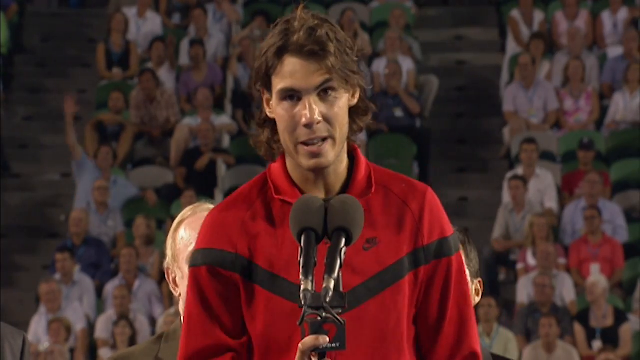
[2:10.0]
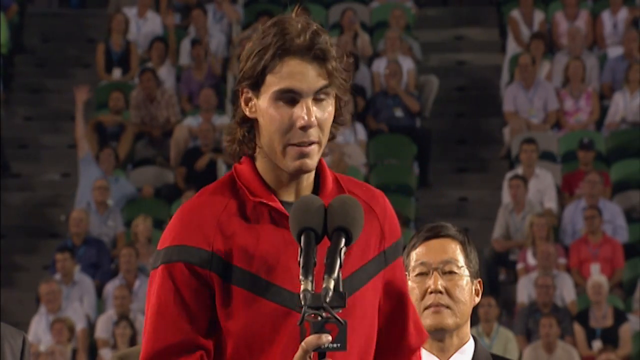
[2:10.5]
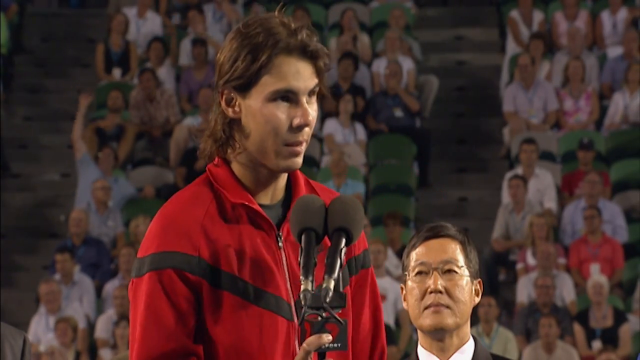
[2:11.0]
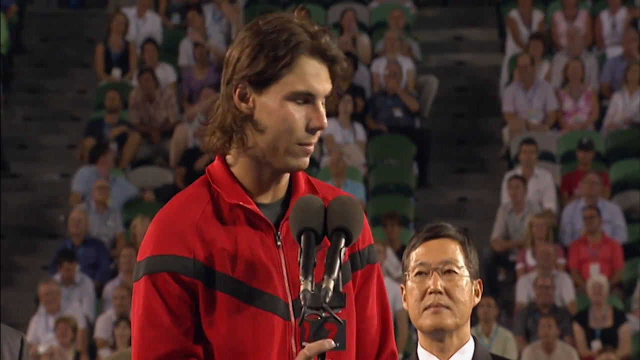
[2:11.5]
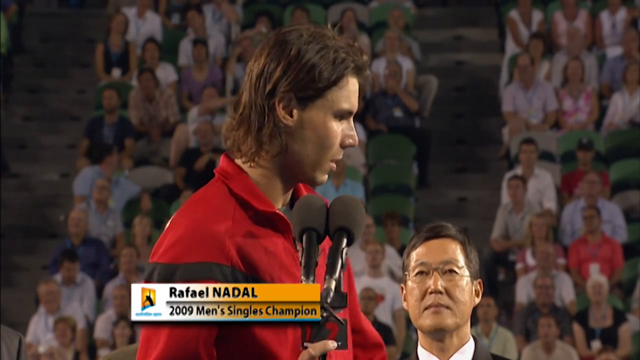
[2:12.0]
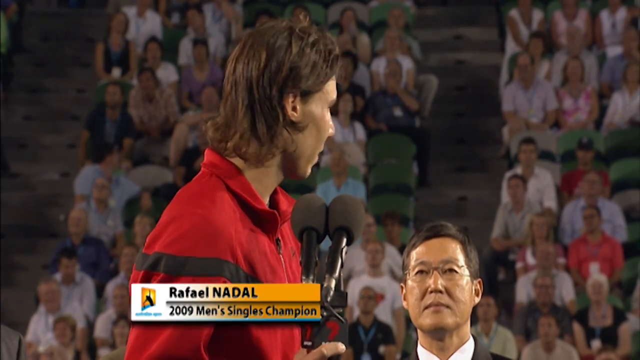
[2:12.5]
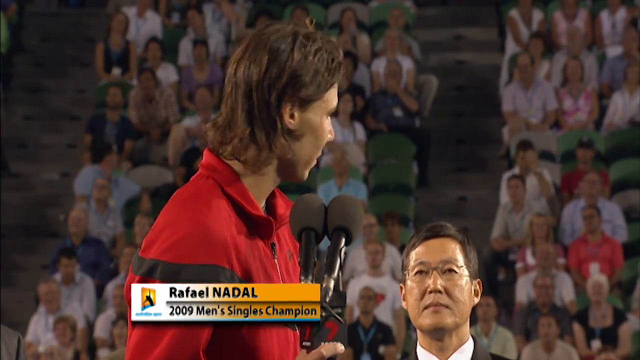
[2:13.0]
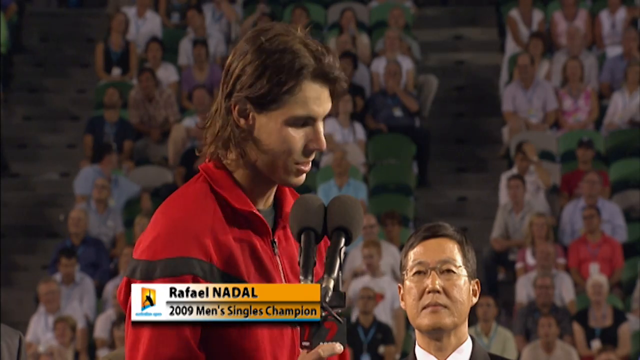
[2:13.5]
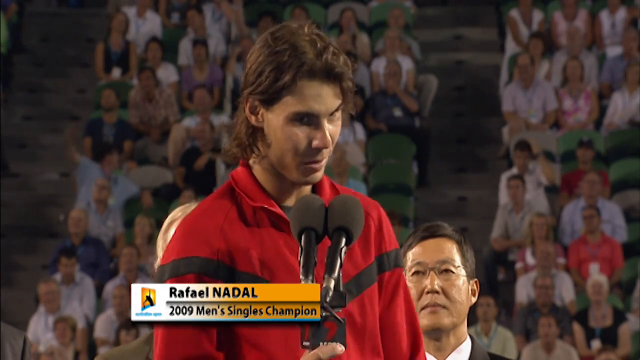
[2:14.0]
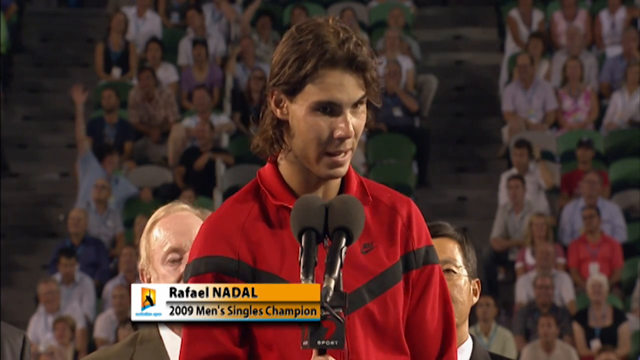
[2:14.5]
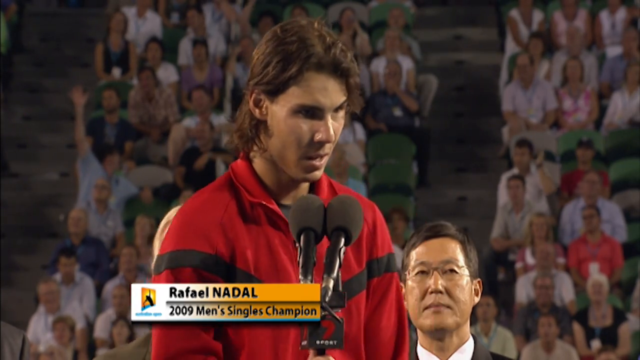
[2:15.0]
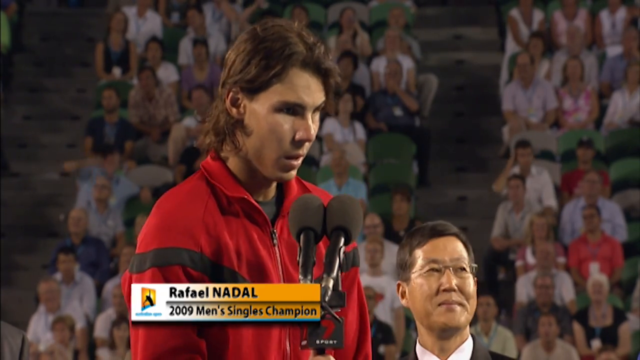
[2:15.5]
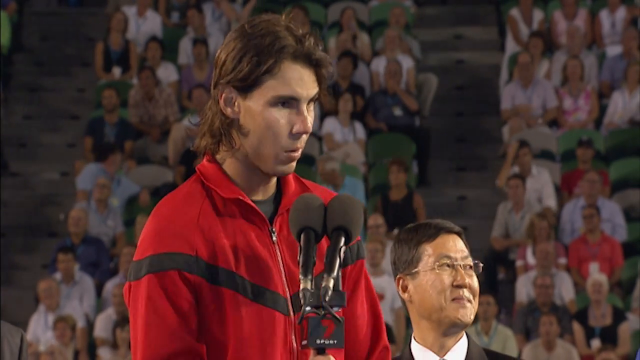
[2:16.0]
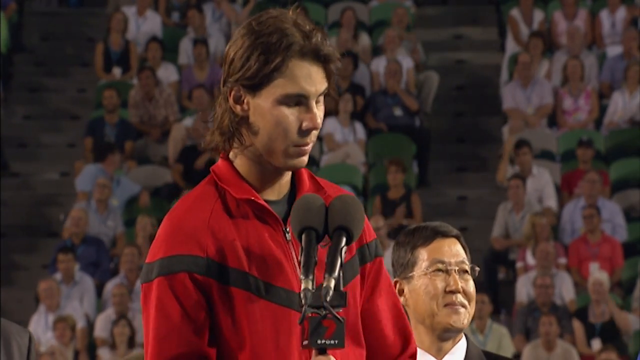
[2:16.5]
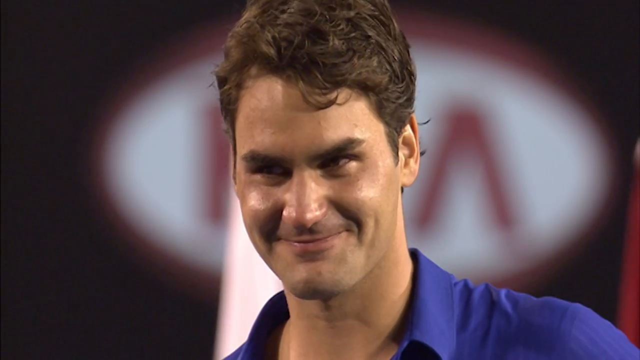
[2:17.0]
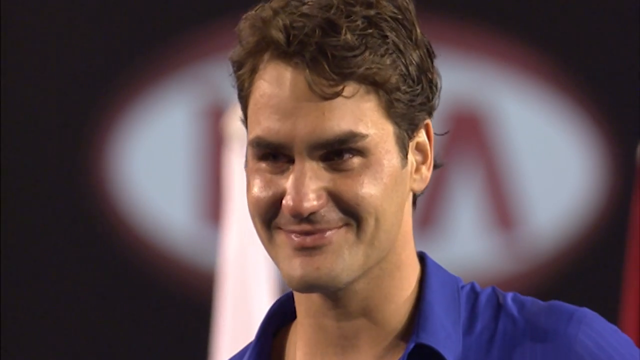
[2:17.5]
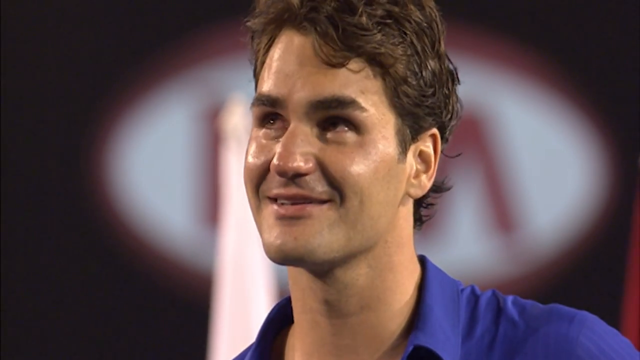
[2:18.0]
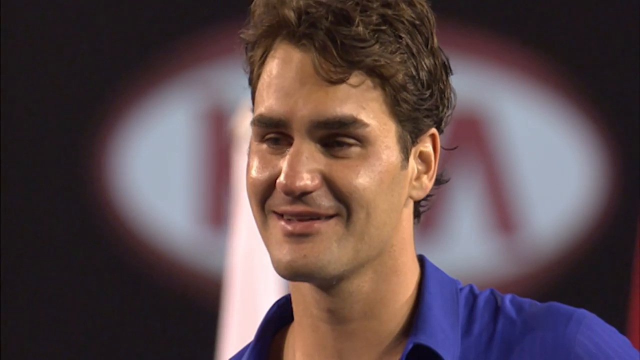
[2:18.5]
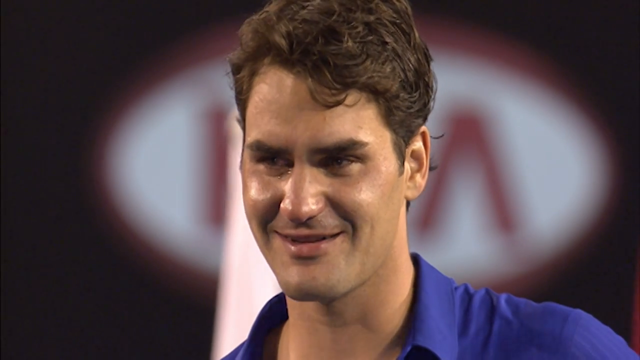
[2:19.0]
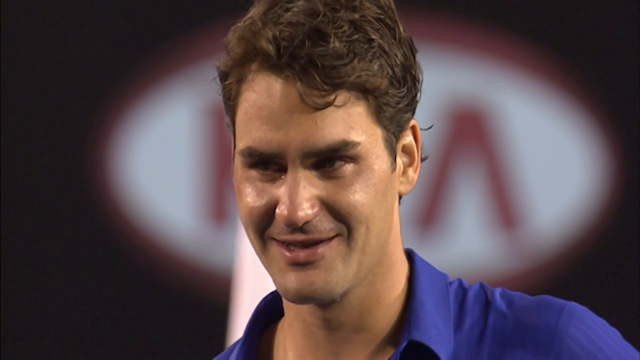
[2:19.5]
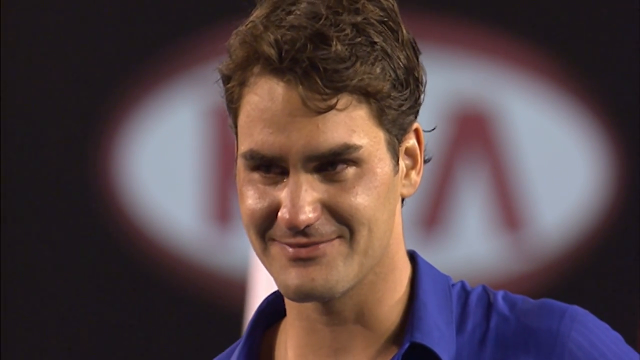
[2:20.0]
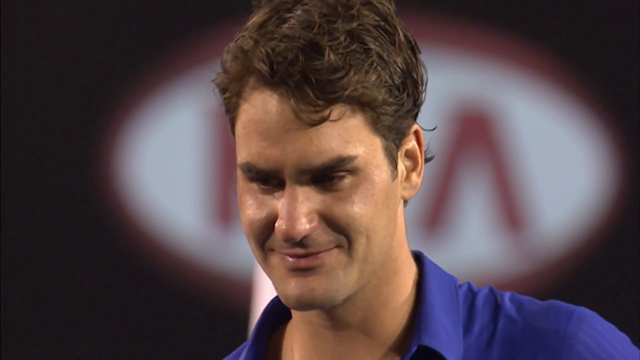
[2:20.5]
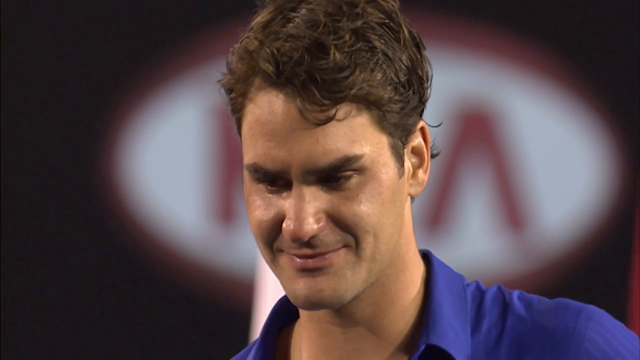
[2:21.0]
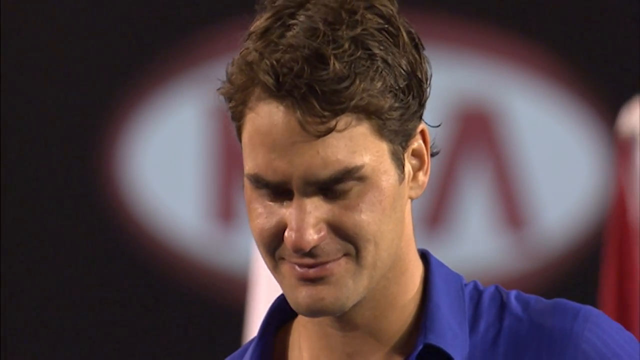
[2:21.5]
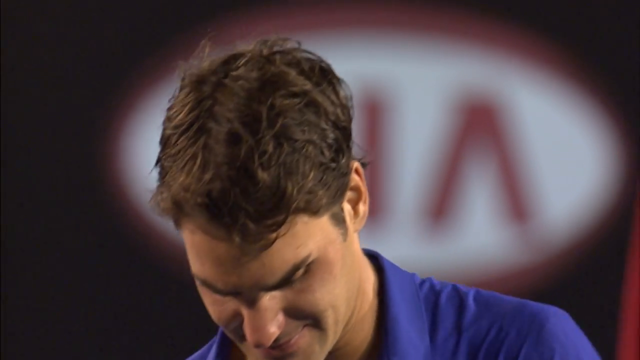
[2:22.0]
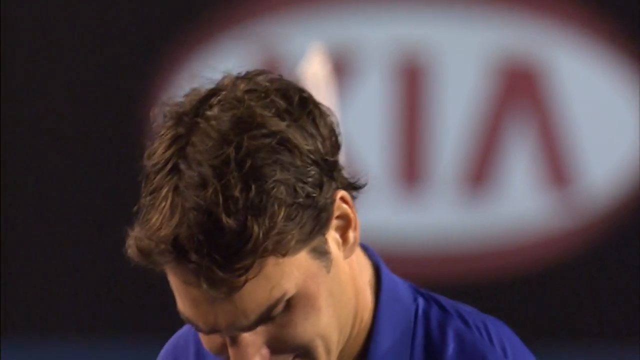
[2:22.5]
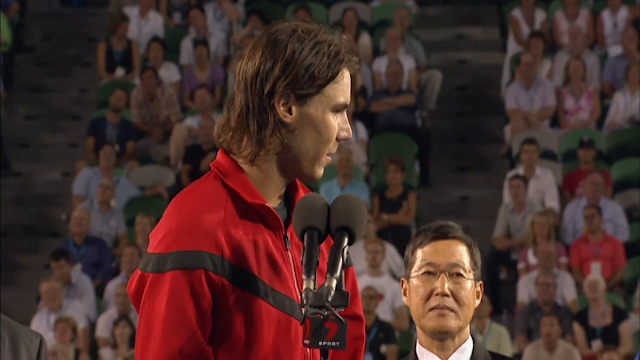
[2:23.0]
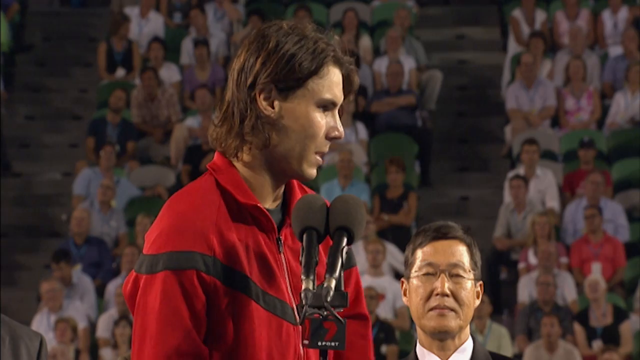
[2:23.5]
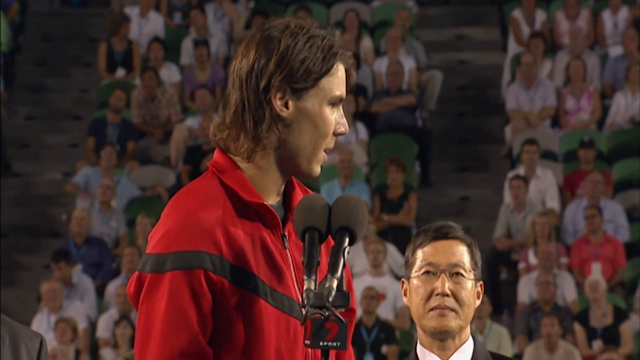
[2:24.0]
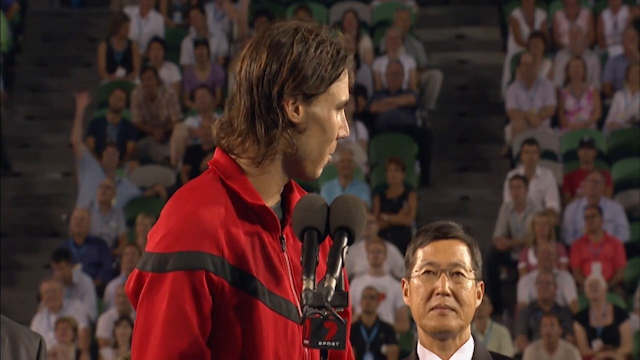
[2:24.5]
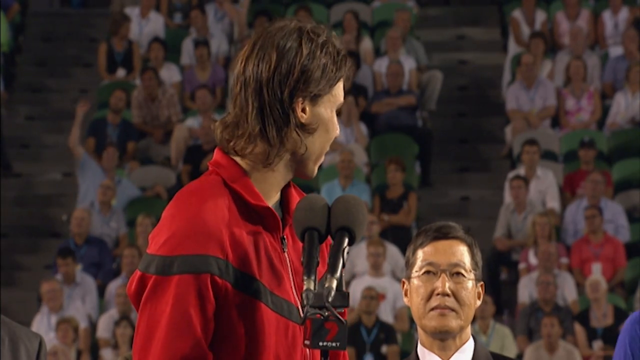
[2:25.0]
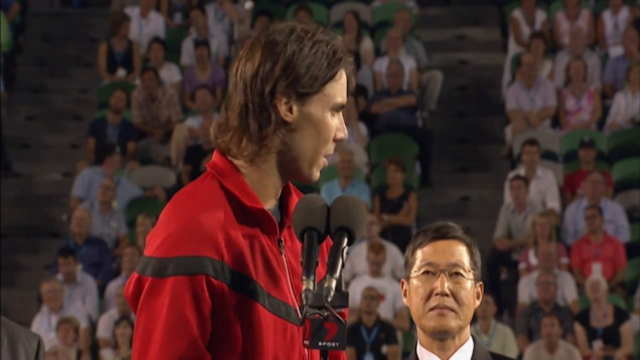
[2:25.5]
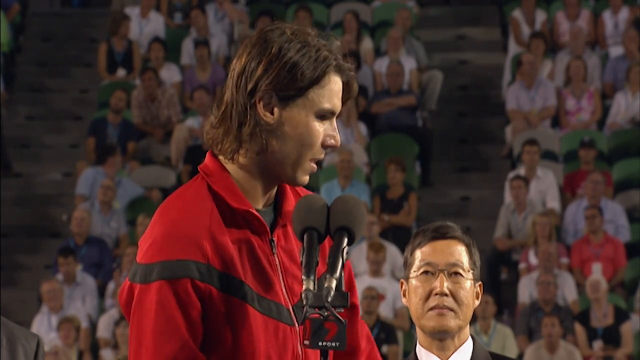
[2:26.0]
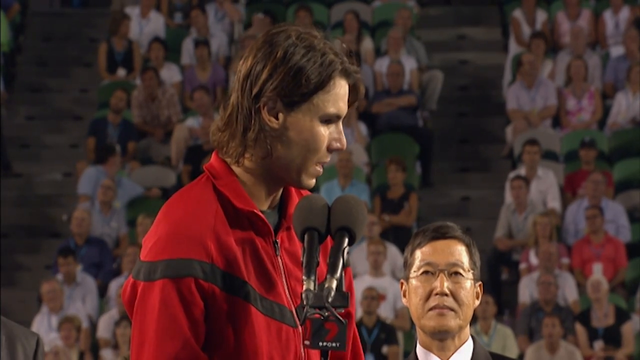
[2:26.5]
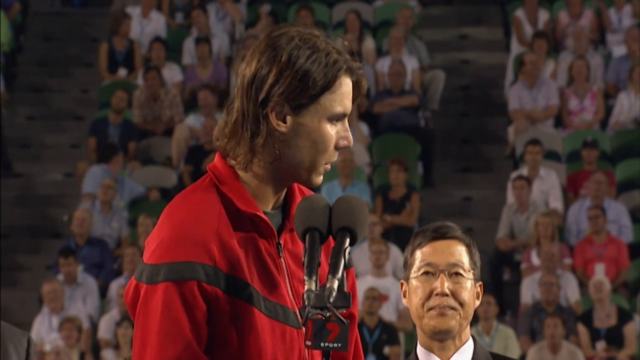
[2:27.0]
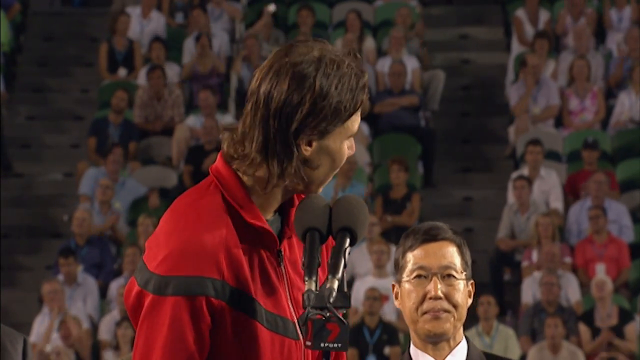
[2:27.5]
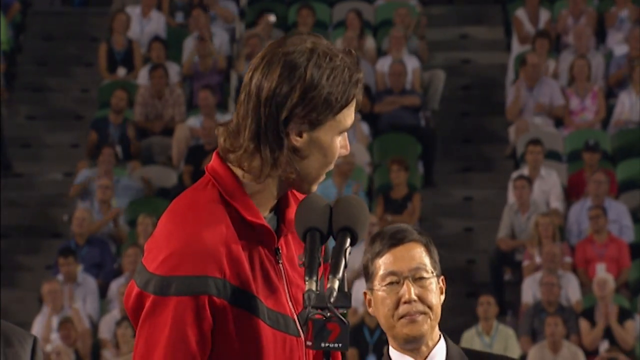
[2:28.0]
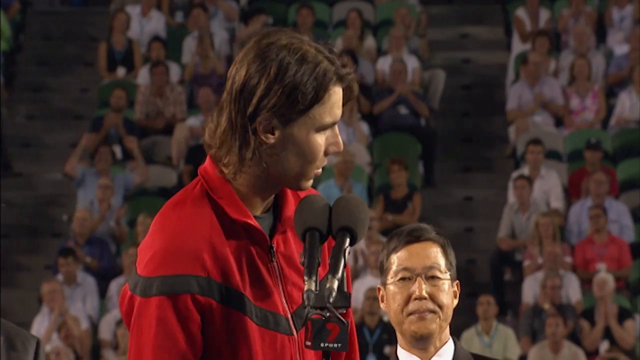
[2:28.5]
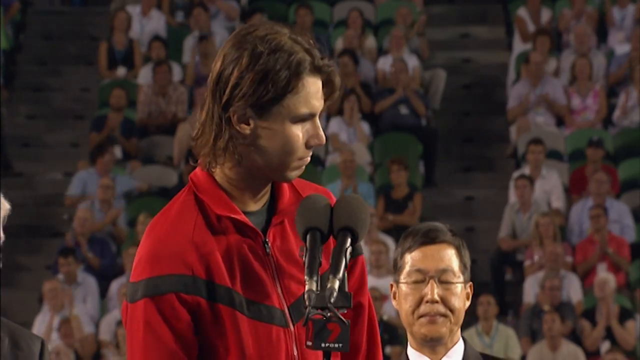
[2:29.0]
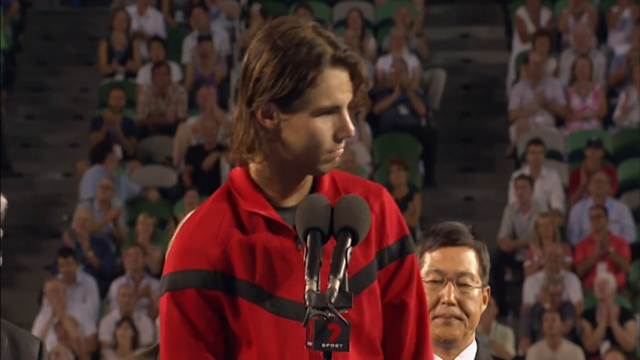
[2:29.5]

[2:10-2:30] The winner, named Raphael Madan, talks while holding the mic with his right hand and wipes his nose. Behind him the fans raise their hands, most of them clapping. The board shifts left and right. The managers behind him watch, some smiling. Both players are sweaty. Raphael wears a black t-shirt under the red jacket. The camera points to Roger, who smiles with a bit of a laugh and nods a bit as he listens, and camera flashes go off at him.